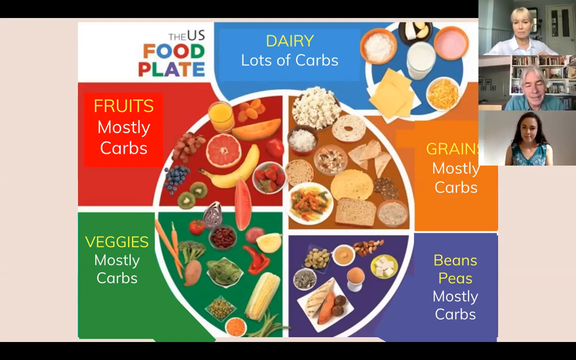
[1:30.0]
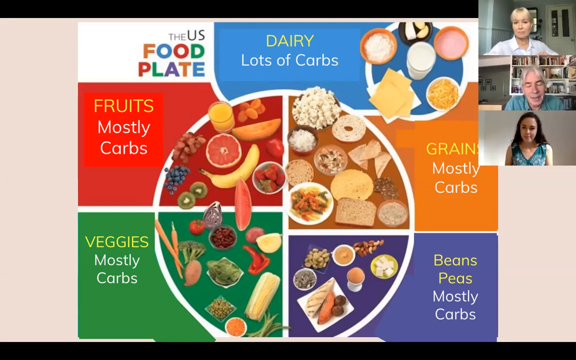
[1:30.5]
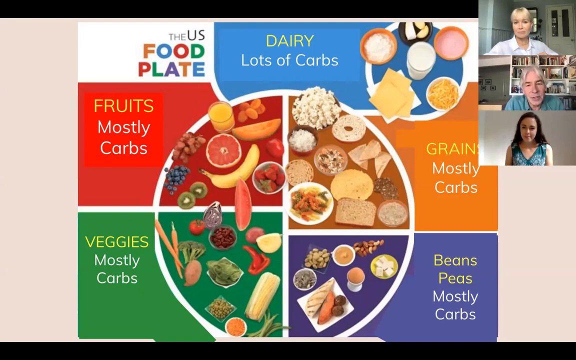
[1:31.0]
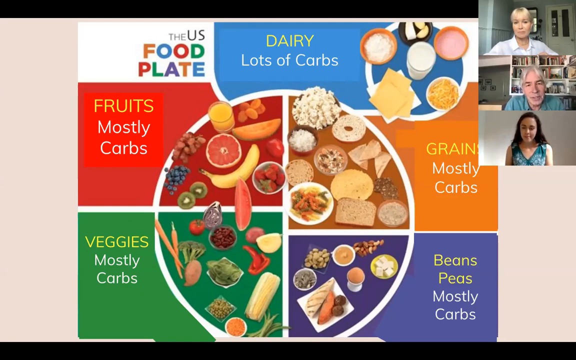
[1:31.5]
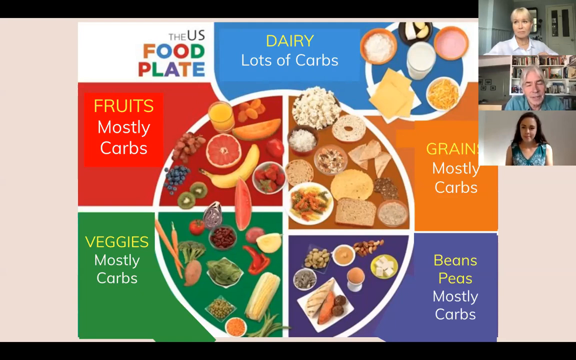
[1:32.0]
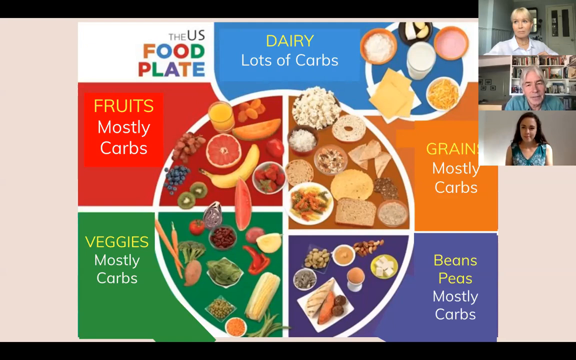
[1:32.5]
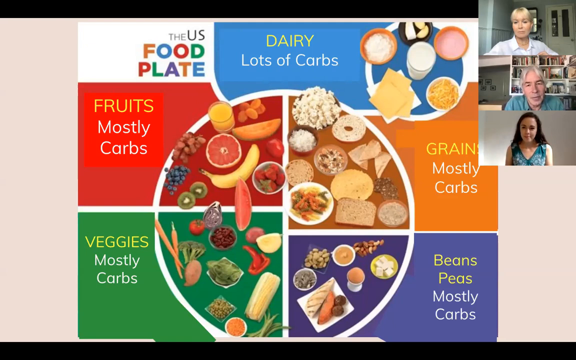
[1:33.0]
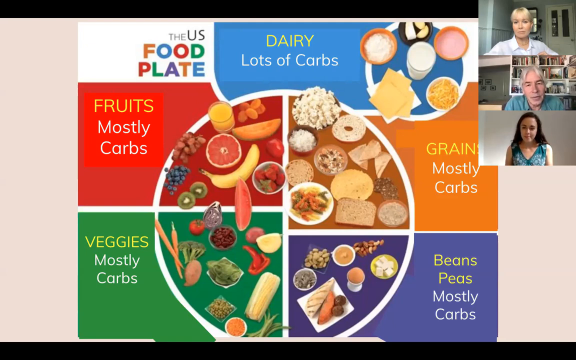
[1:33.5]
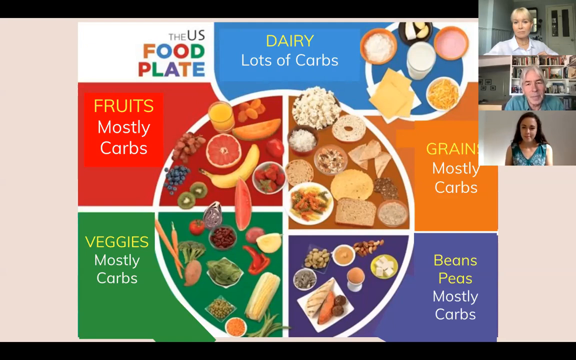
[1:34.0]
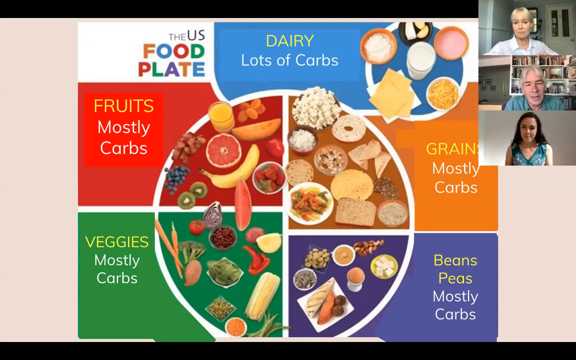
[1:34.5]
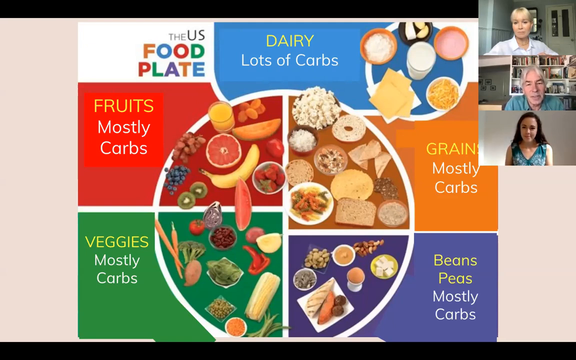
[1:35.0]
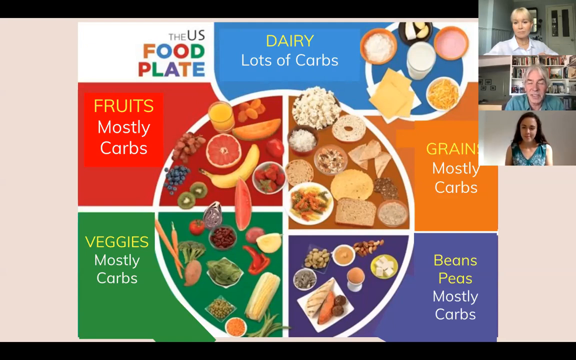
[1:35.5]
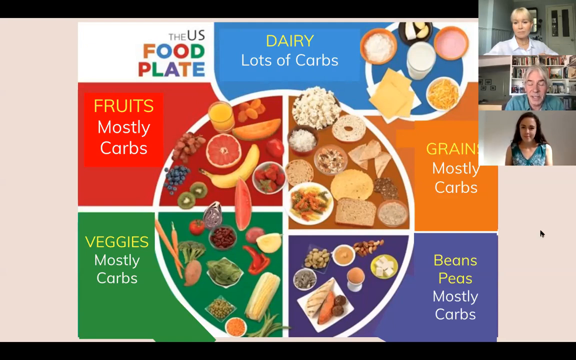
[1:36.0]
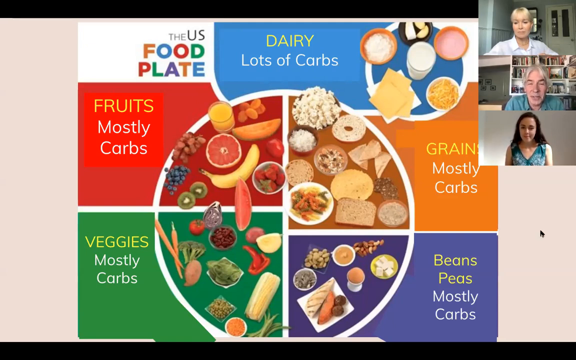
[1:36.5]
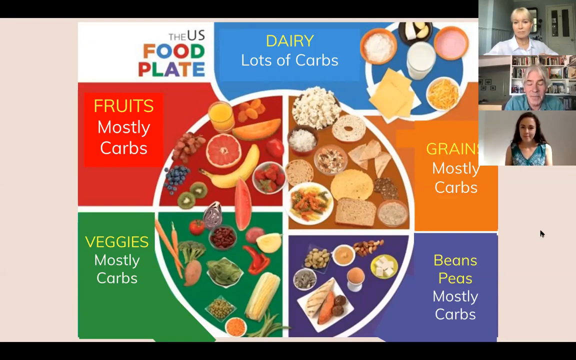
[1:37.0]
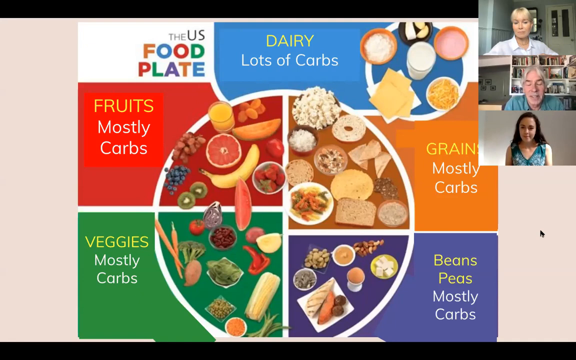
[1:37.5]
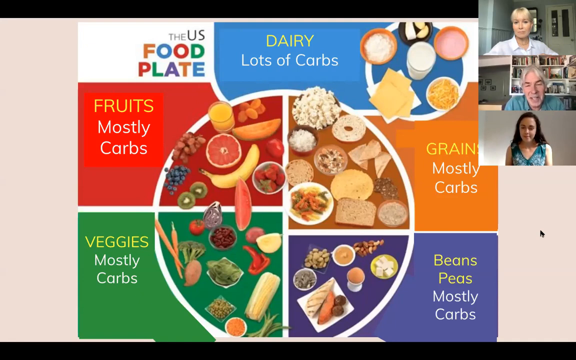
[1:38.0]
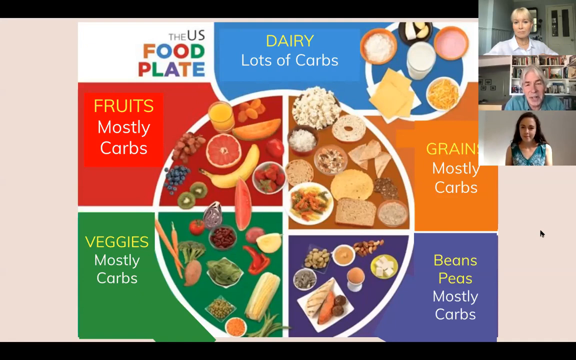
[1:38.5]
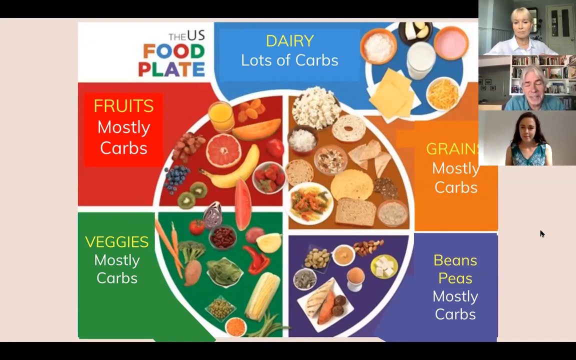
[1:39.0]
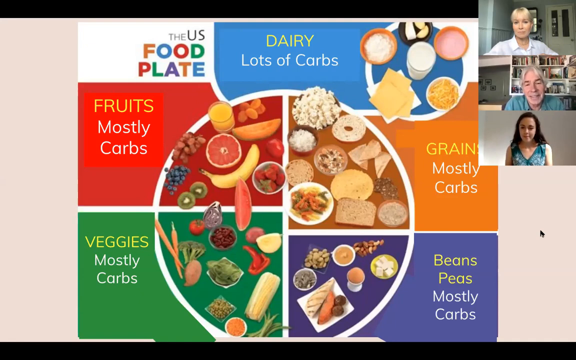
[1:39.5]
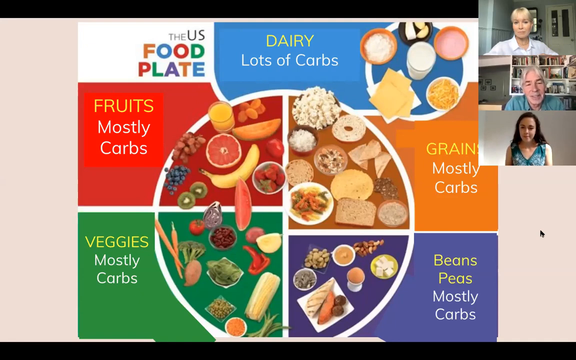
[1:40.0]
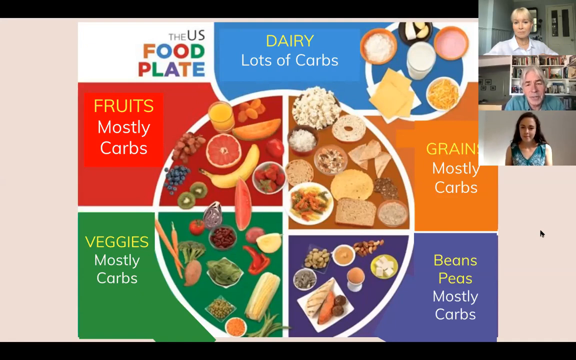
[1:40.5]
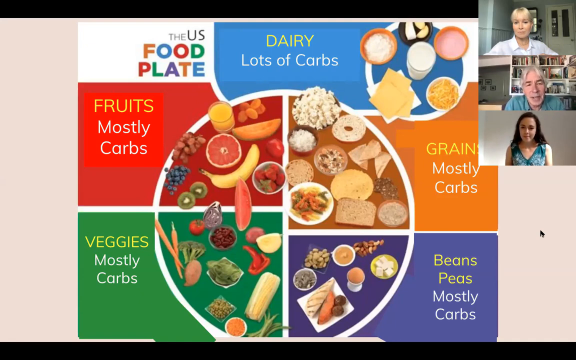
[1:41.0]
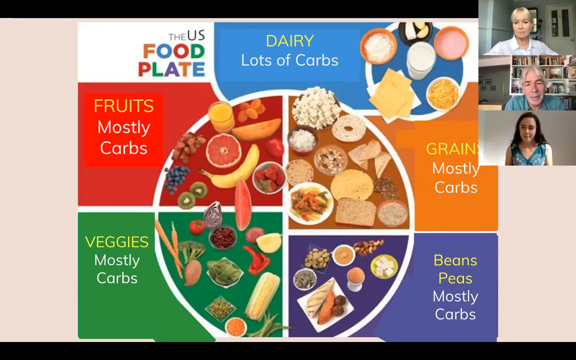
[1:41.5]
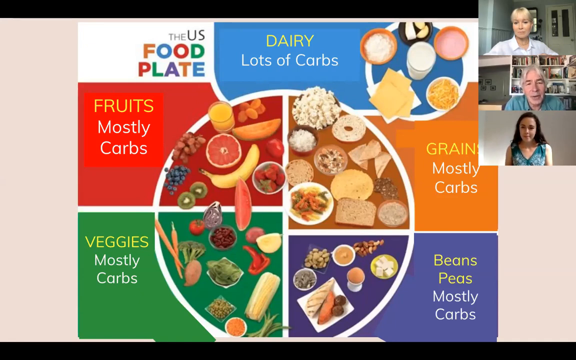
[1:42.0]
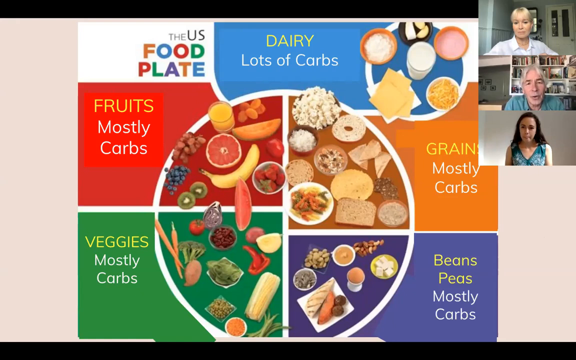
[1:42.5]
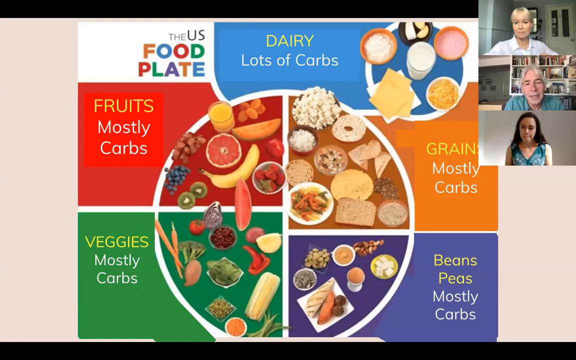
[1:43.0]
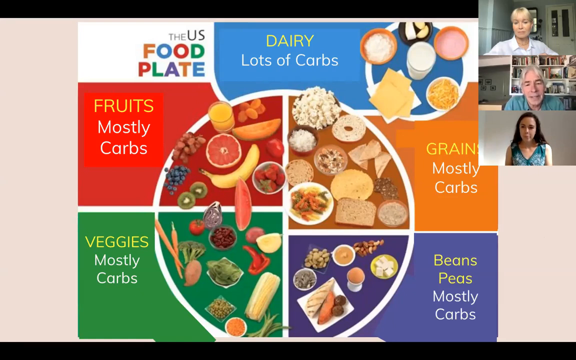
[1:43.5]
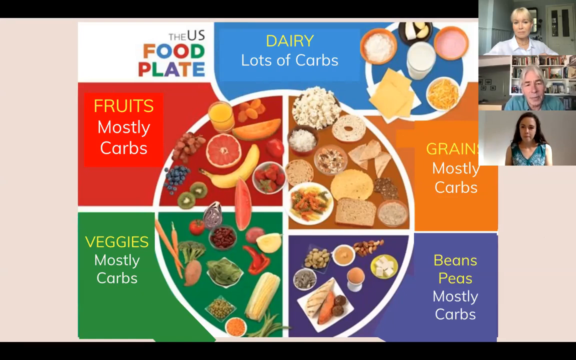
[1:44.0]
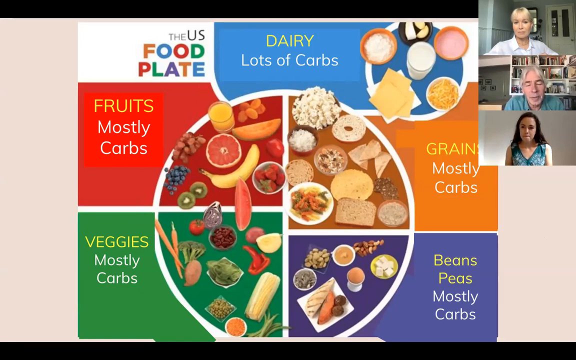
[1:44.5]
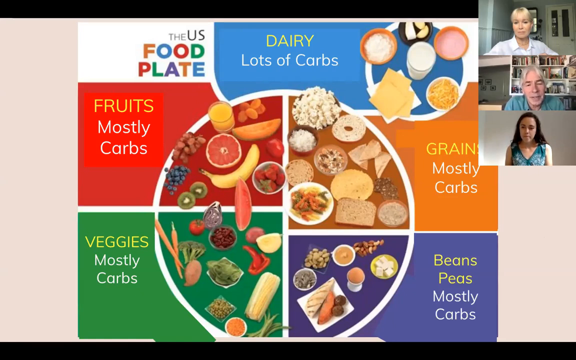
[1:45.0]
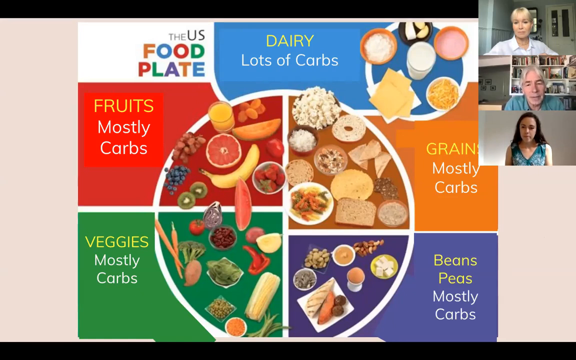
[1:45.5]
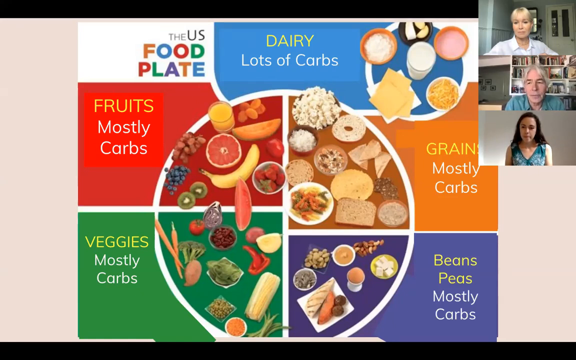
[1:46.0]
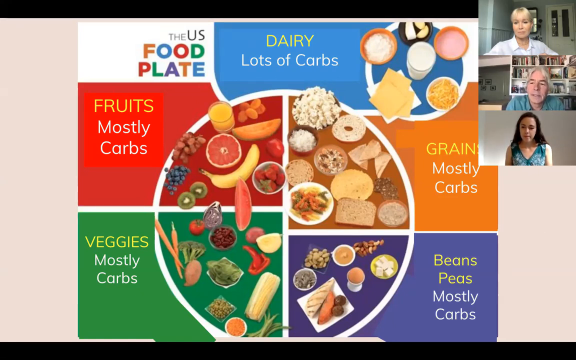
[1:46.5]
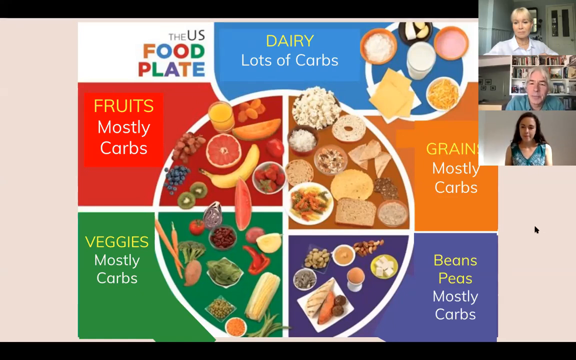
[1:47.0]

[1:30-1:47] A big graphical chart, poster, or image takes up most of the screen in the center. At its top left corner, multicolored text reads "the U.S. food plate," and to the right of that it says "dairy, lots of carbs." To the right of those words, toward but not quite at the top right corner of the screen, is a white circle with dairy foods such as milk and cheese. To the right of that, at the very top right corner, are three rectangular windows with video or live feeds of three different people. The top one is a white Caucasian female with blonde hair and a white shirt. Below her is a Caucasian man with gray hair and a green shirt, who is speaking. The last window shows a Caucasian female with black or dark brown hair wearing a sleeveless green and white shirt or blouse.